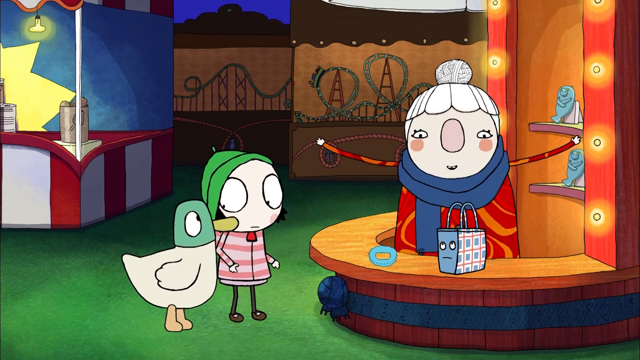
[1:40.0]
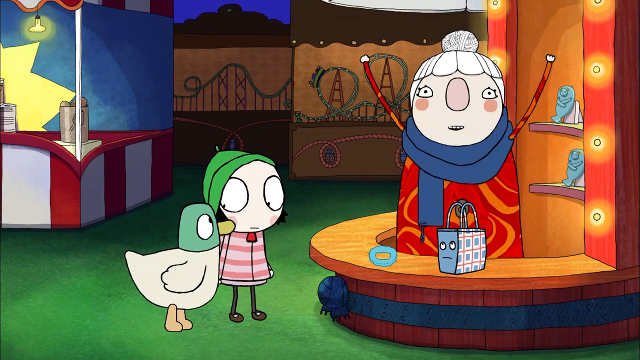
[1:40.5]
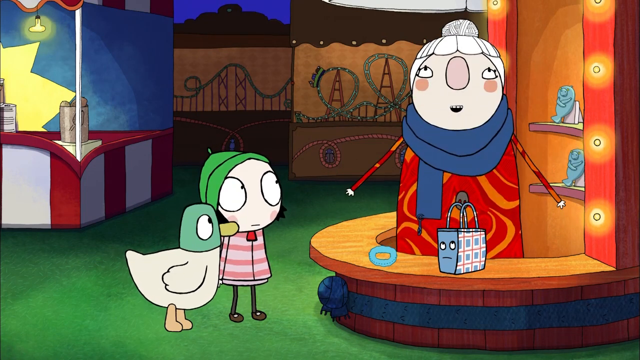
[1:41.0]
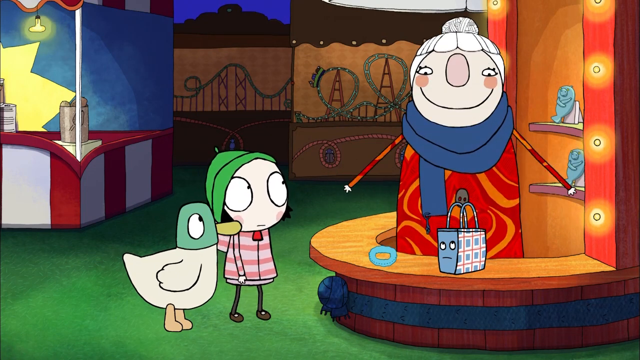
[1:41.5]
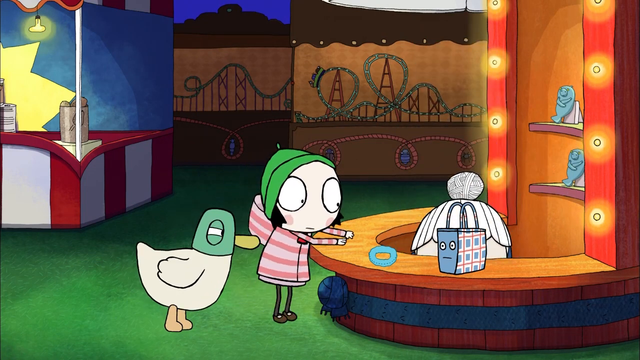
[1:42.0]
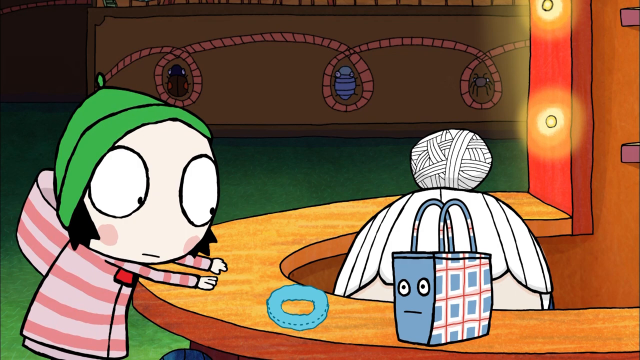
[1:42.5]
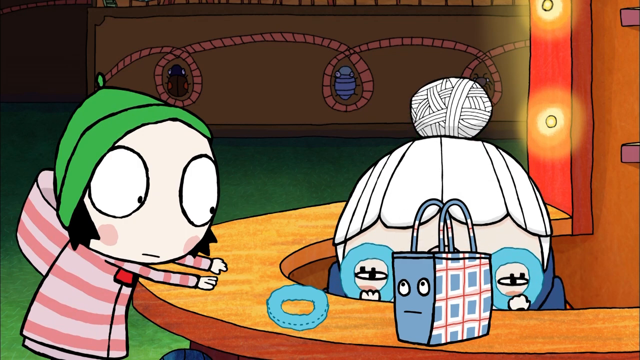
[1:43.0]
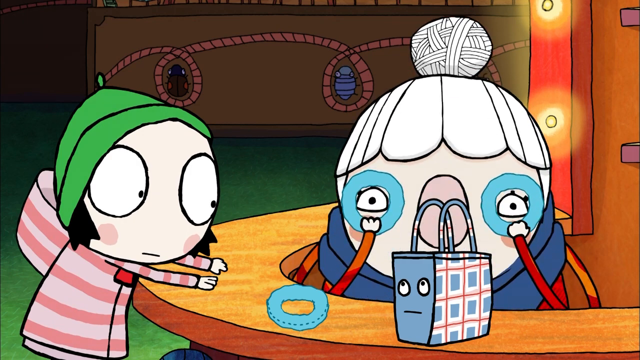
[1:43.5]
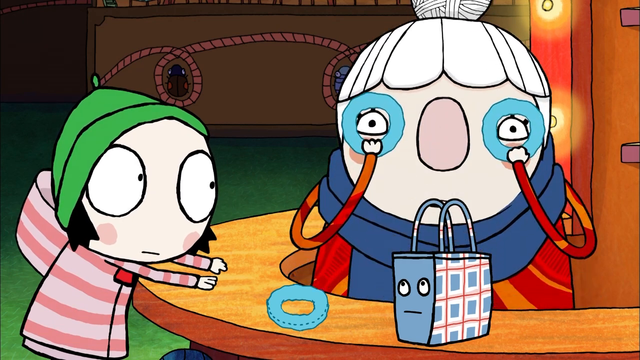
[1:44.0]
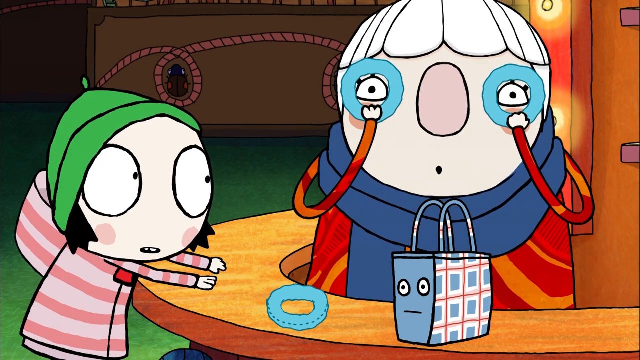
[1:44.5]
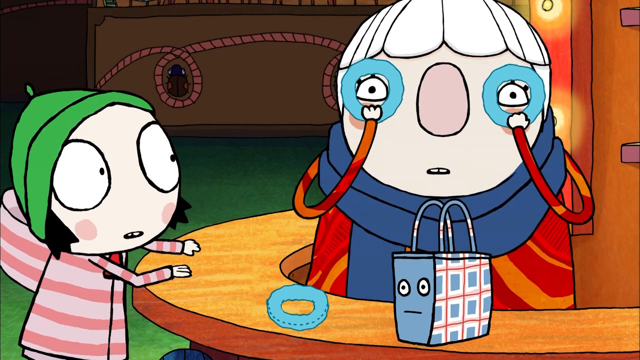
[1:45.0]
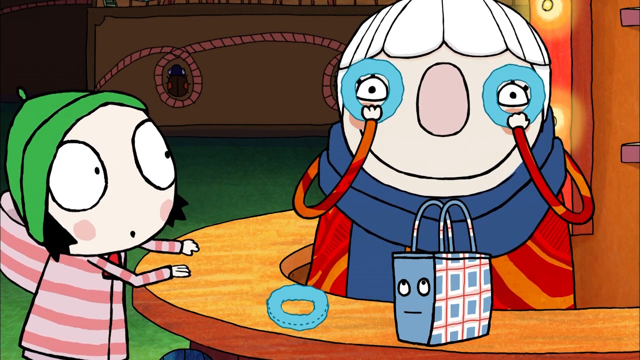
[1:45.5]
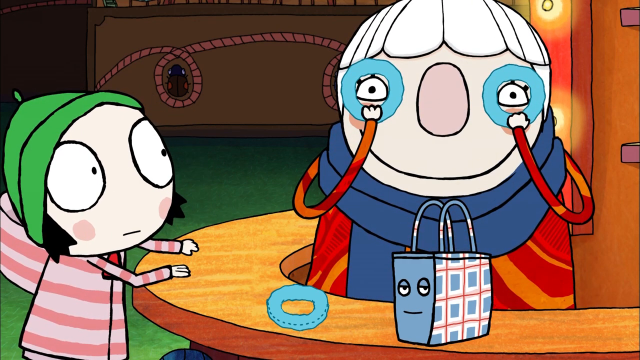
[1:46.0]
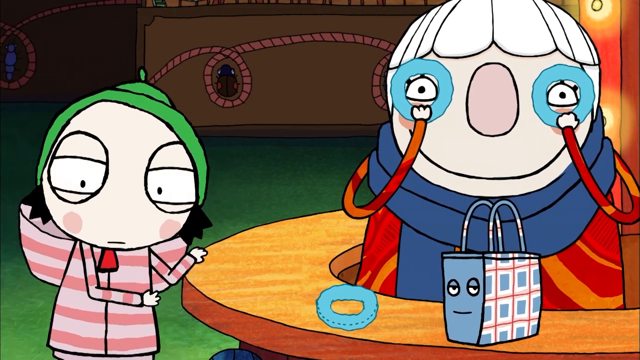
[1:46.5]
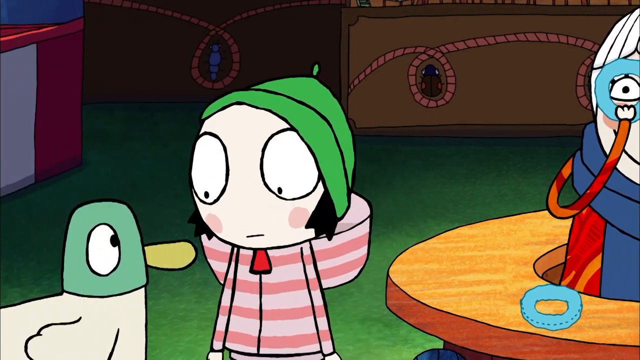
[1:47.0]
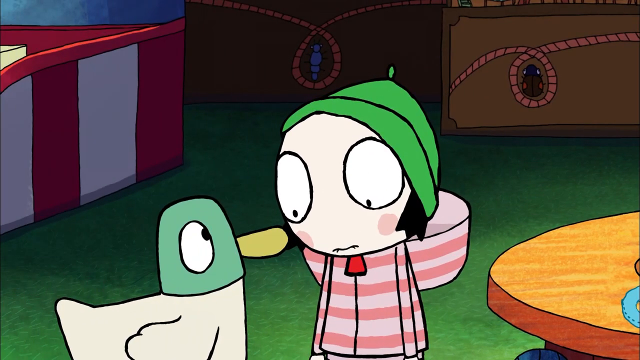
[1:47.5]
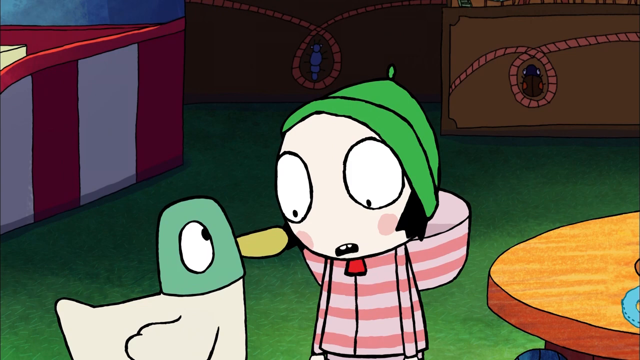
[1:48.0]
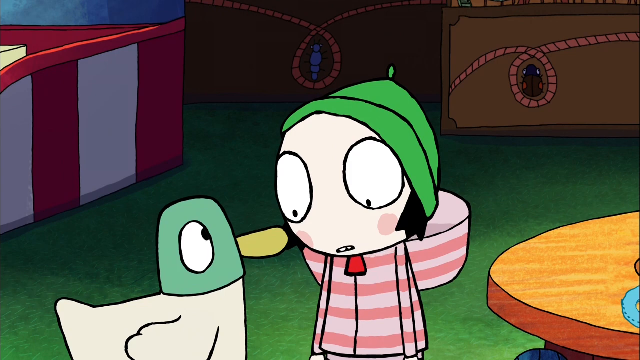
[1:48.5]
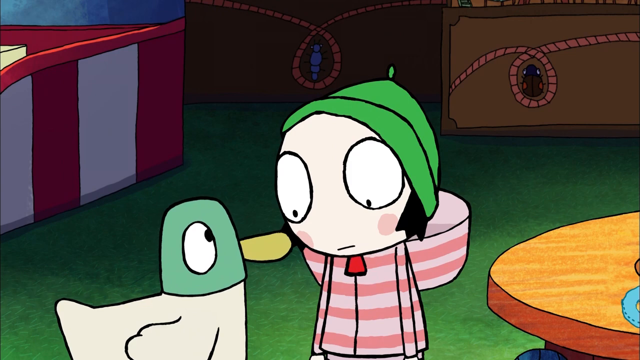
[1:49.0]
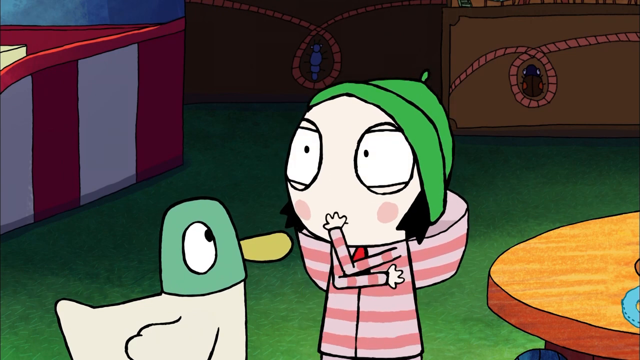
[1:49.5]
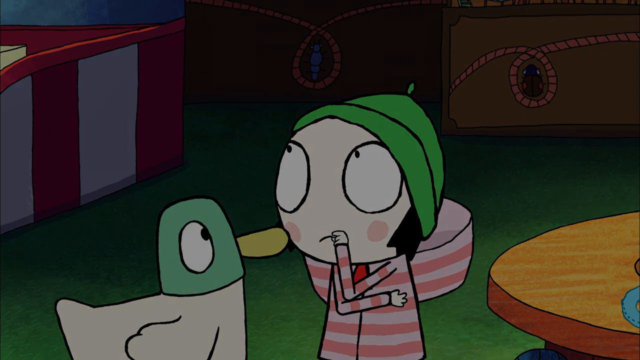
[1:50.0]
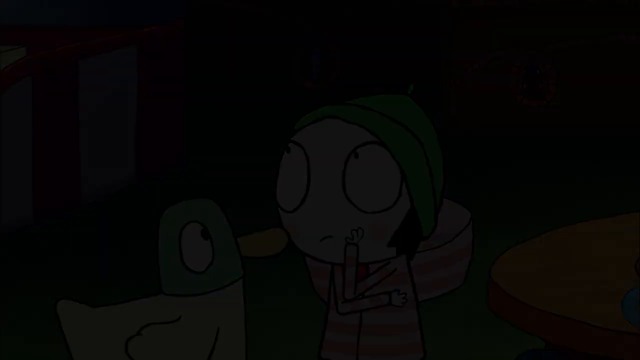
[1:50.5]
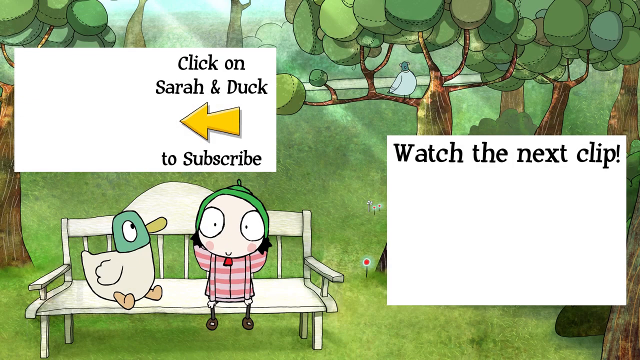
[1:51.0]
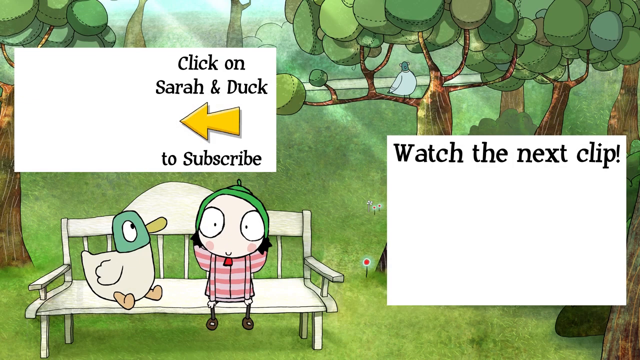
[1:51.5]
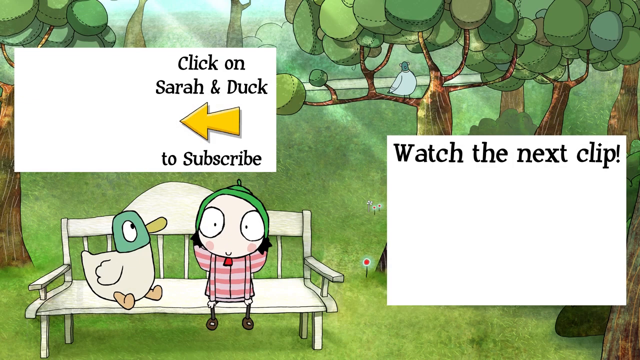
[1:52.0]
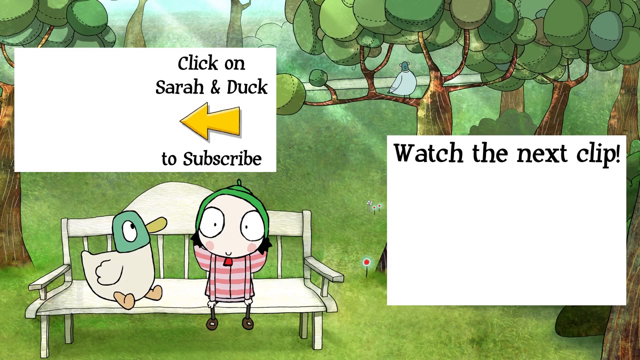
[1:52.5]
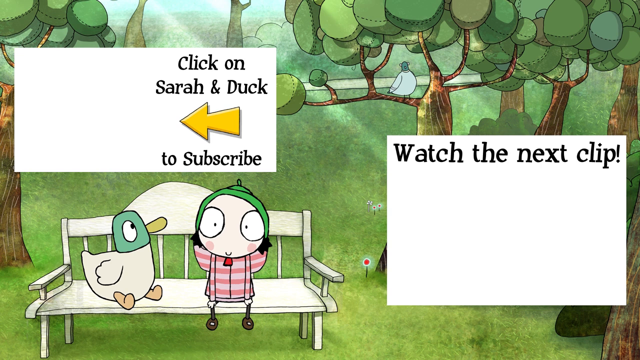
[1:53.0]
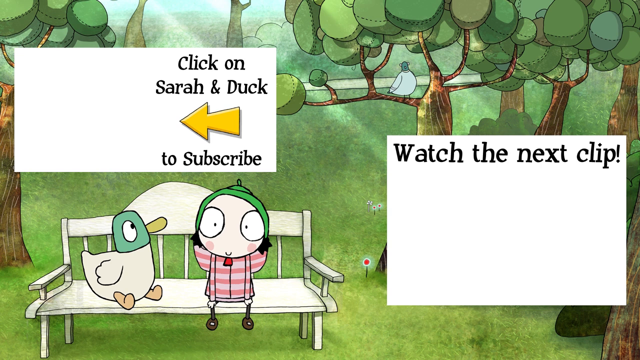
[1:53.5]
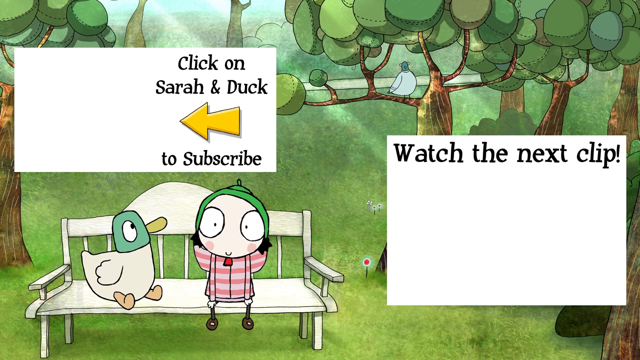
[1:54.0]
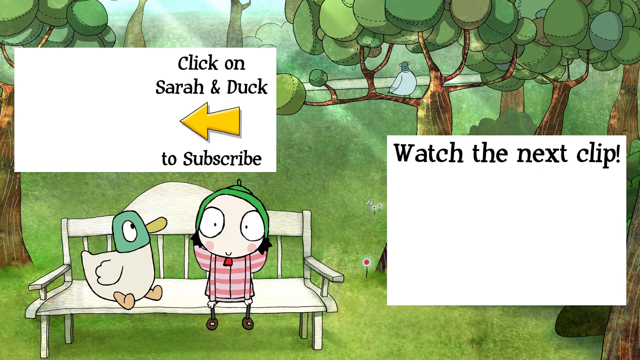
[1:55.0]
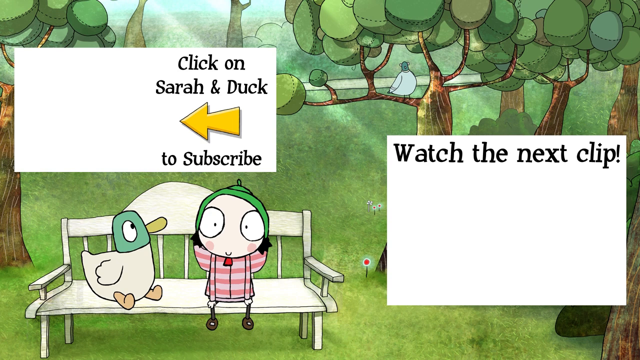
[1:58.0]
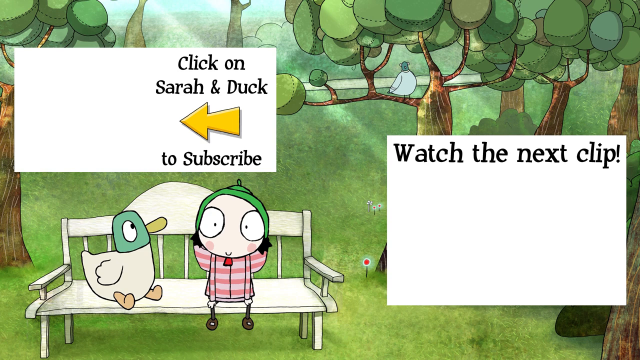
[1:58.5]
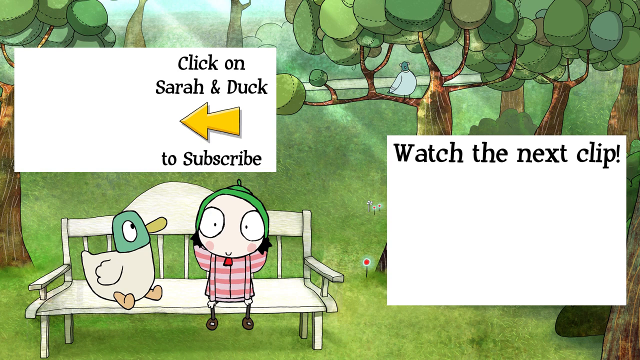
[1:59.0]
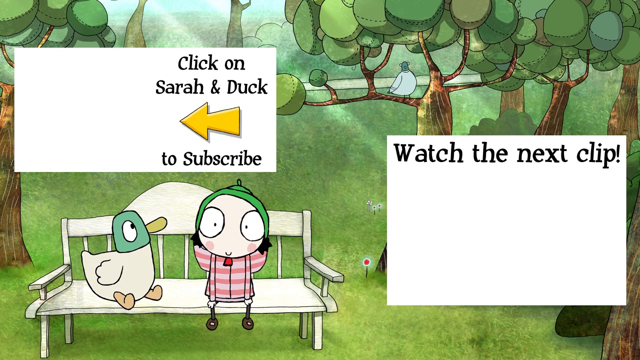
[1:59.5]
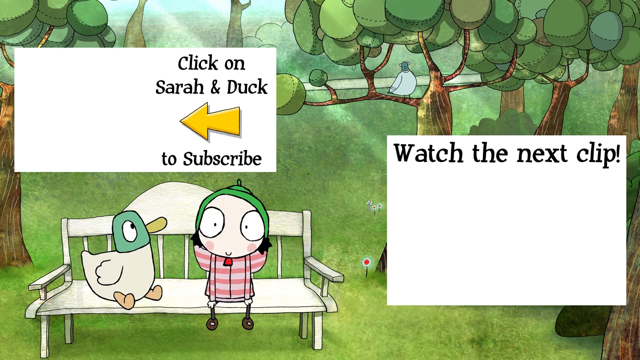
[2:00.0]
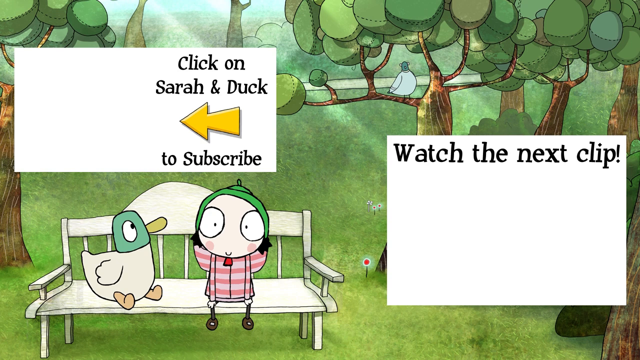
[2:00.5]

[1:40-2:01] In this cartoon series about Zara and a dog, the two are at a circus, and the dog is interested in buying something from a lady who is selling a wrist band. Zara cannot see where the dog is, so she looks around, but the dog does not appear; the dog just continues on.